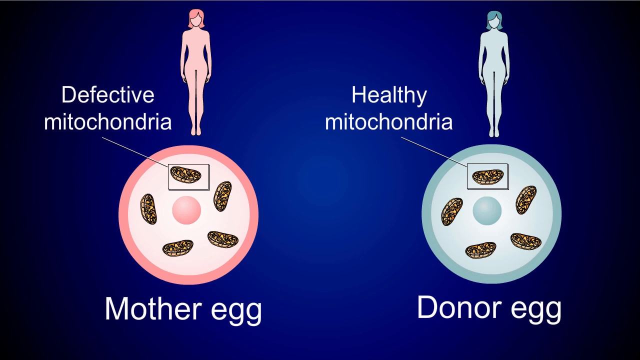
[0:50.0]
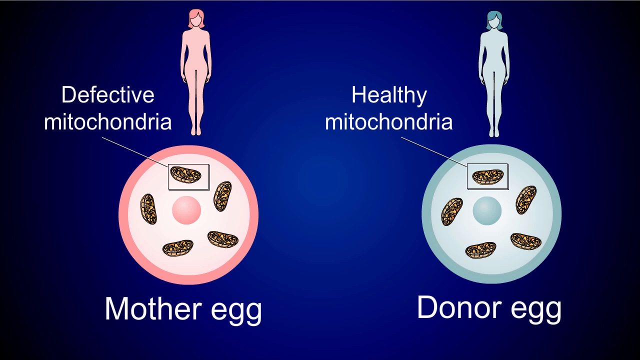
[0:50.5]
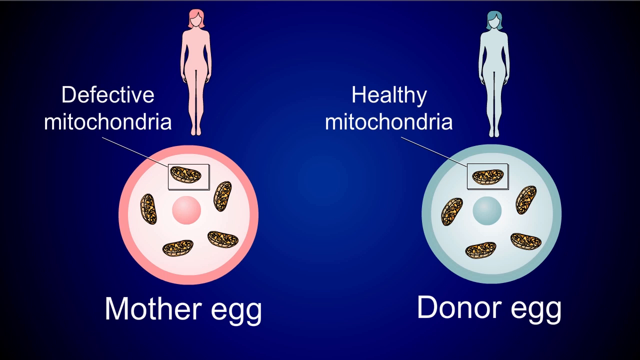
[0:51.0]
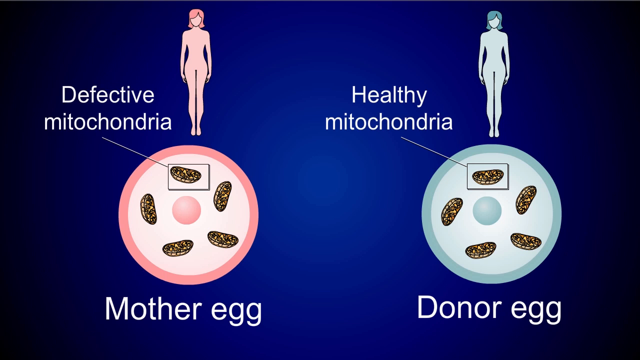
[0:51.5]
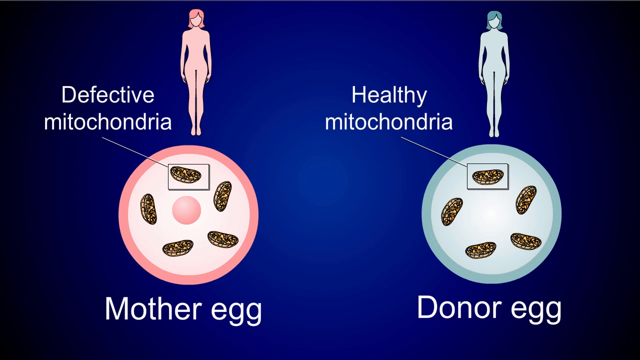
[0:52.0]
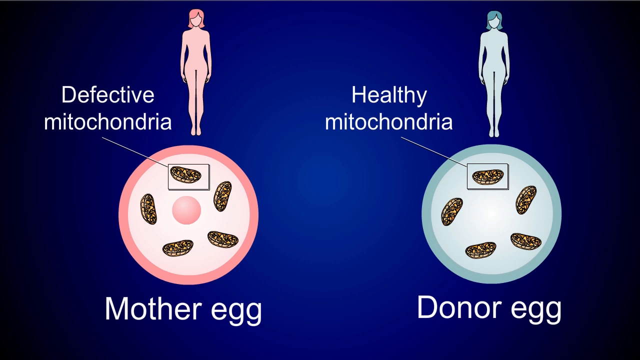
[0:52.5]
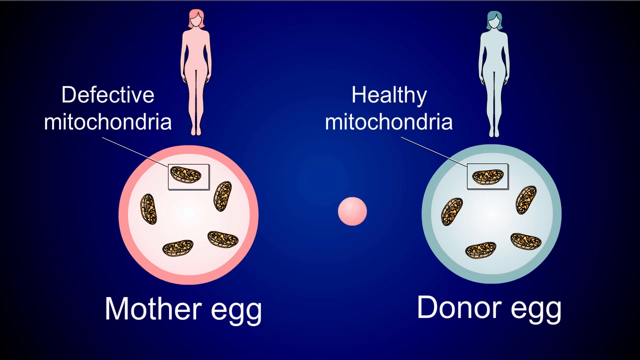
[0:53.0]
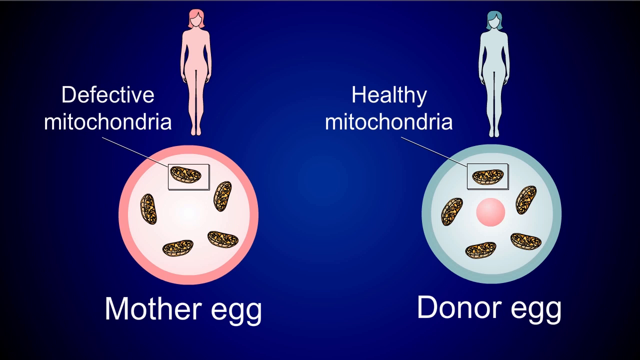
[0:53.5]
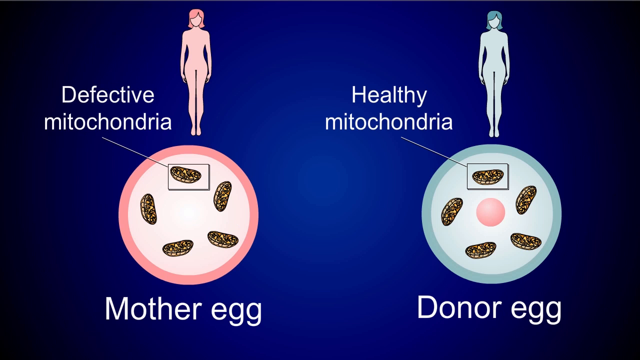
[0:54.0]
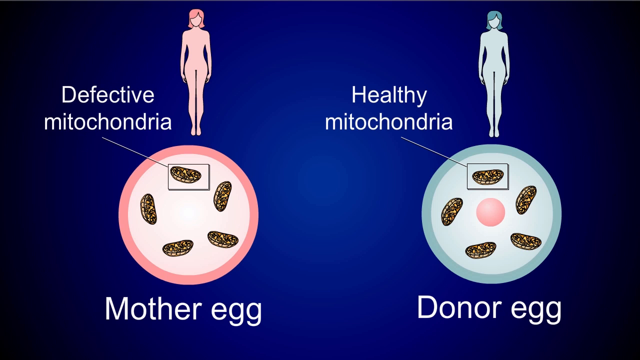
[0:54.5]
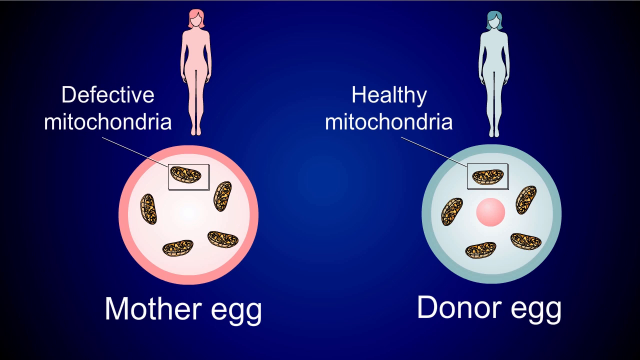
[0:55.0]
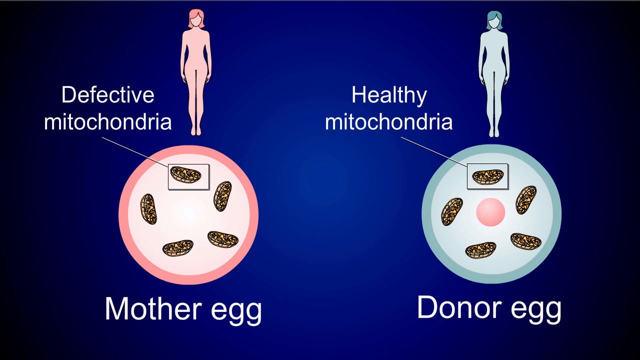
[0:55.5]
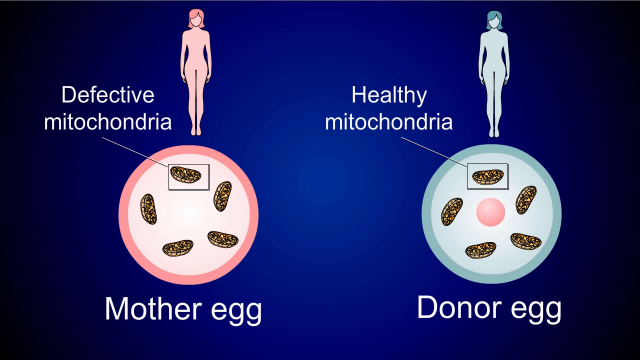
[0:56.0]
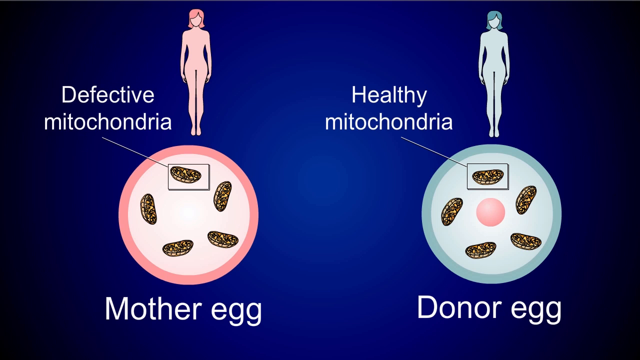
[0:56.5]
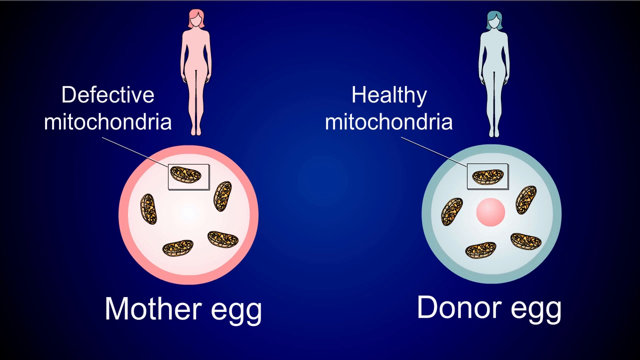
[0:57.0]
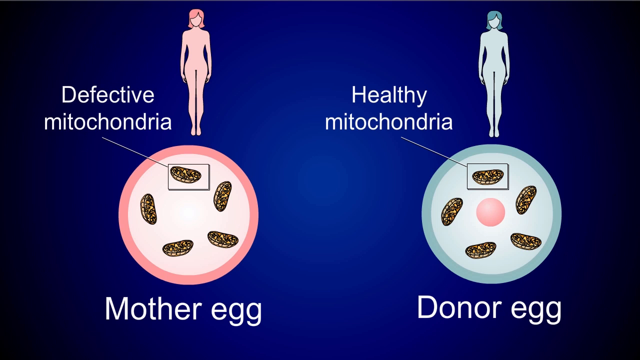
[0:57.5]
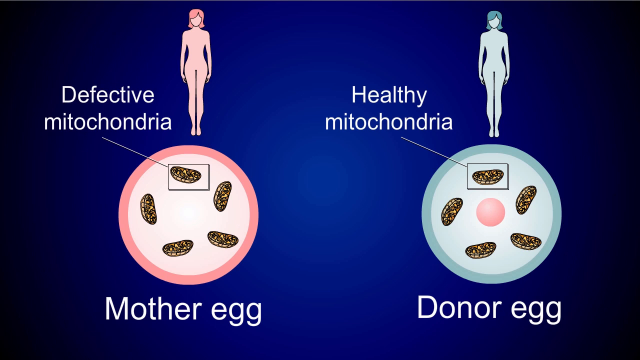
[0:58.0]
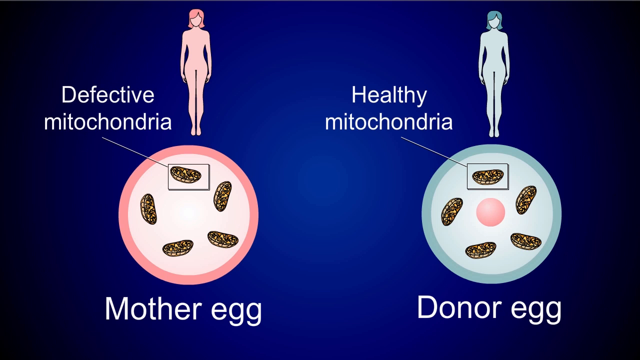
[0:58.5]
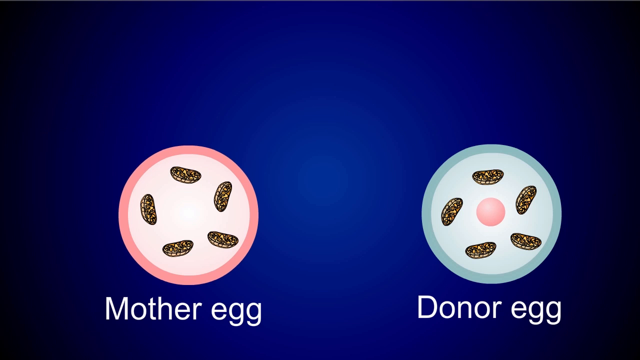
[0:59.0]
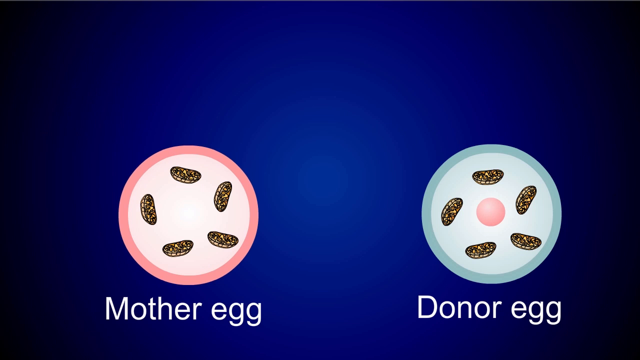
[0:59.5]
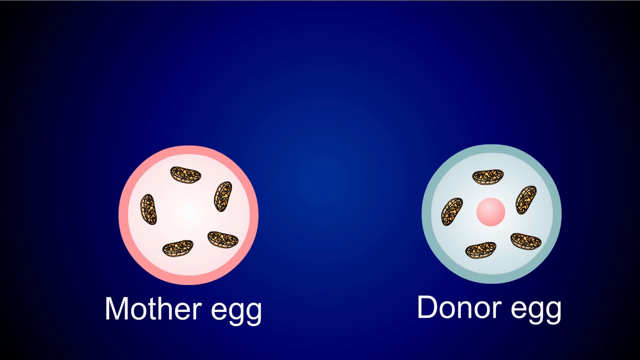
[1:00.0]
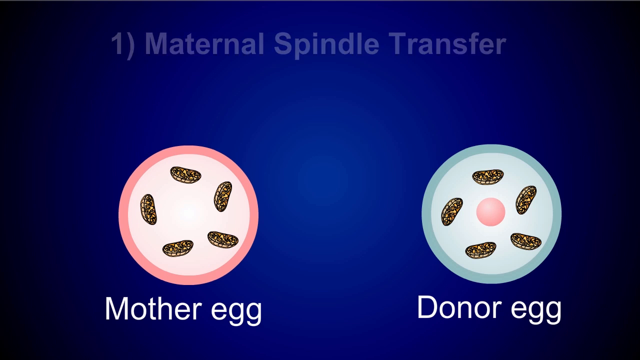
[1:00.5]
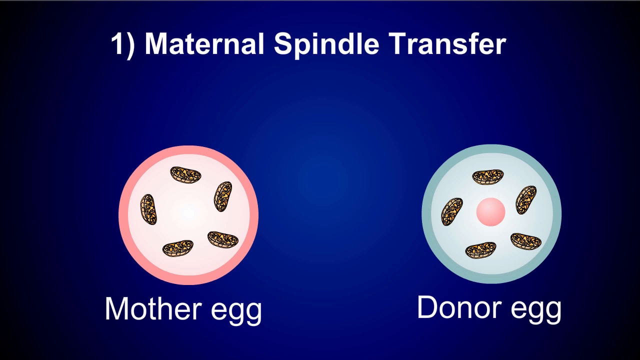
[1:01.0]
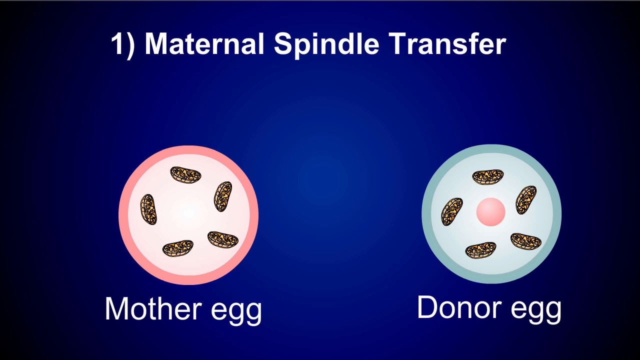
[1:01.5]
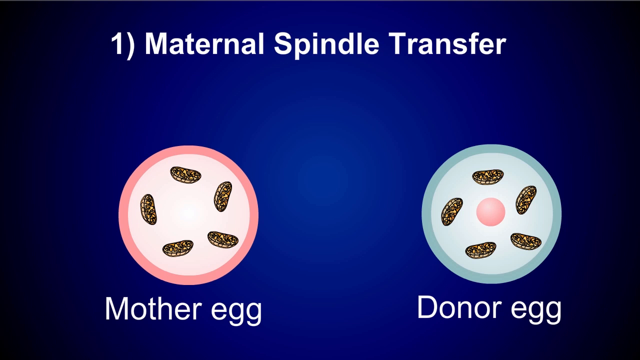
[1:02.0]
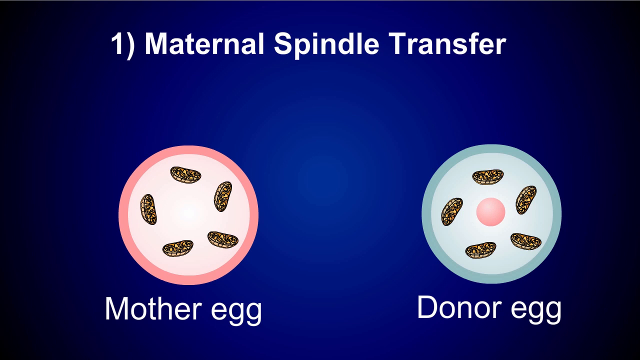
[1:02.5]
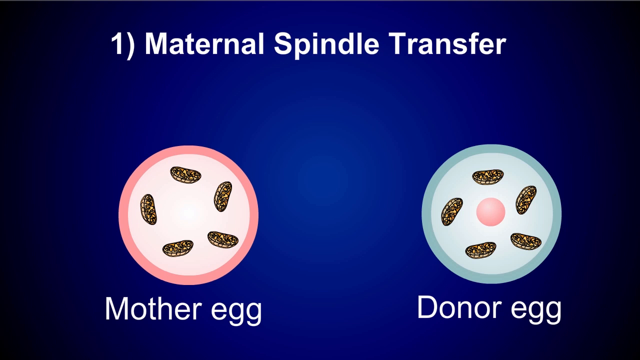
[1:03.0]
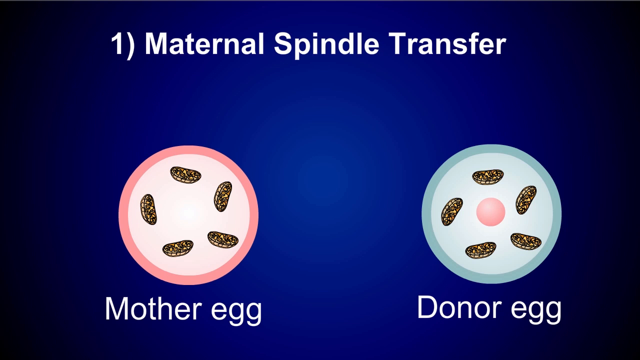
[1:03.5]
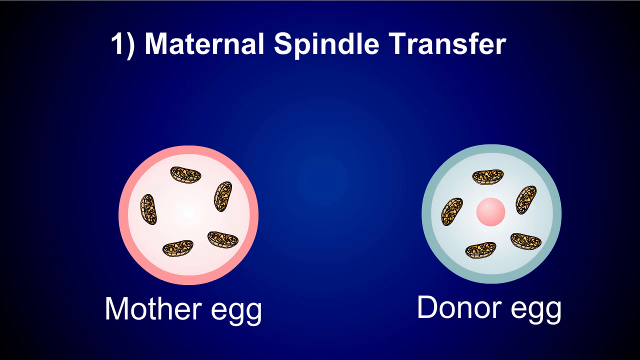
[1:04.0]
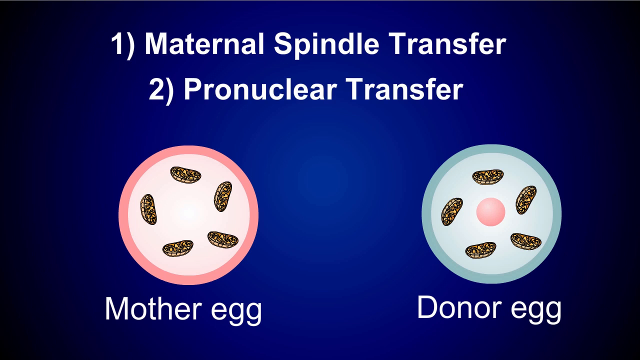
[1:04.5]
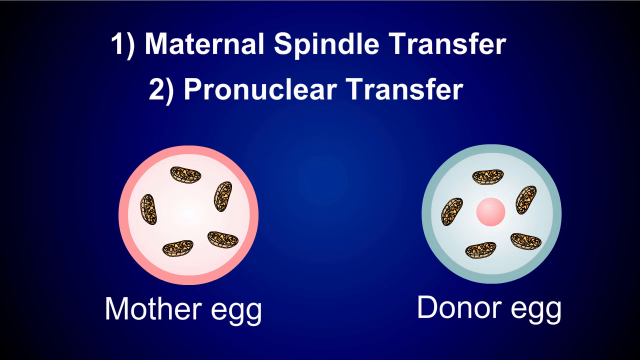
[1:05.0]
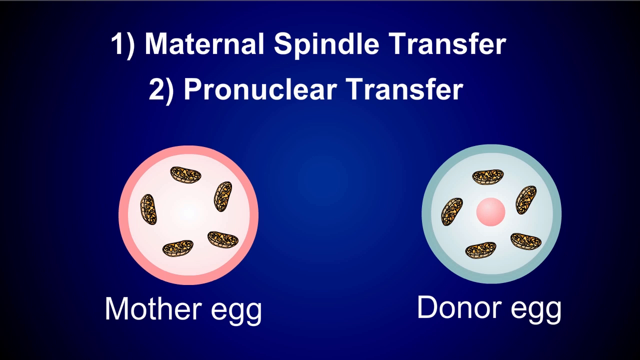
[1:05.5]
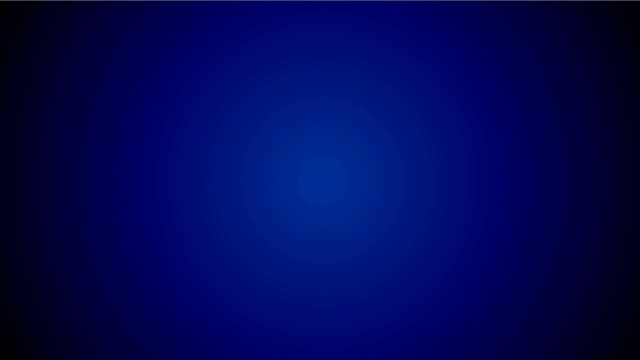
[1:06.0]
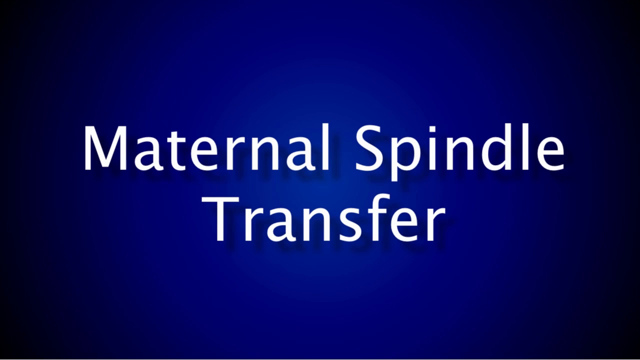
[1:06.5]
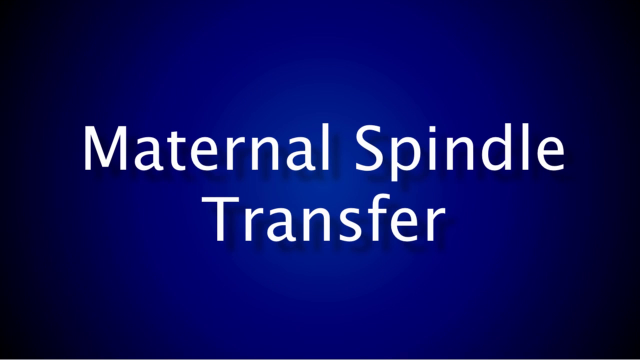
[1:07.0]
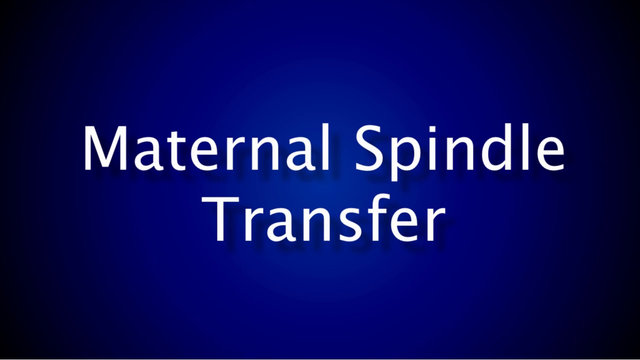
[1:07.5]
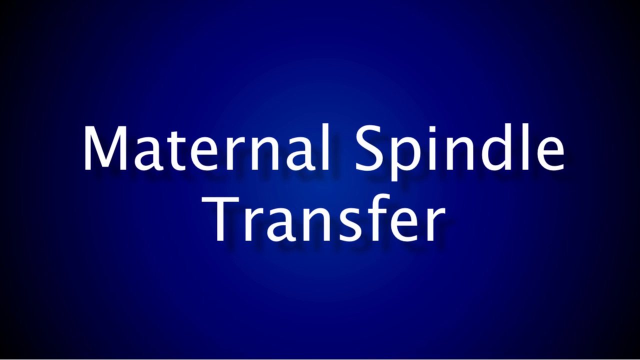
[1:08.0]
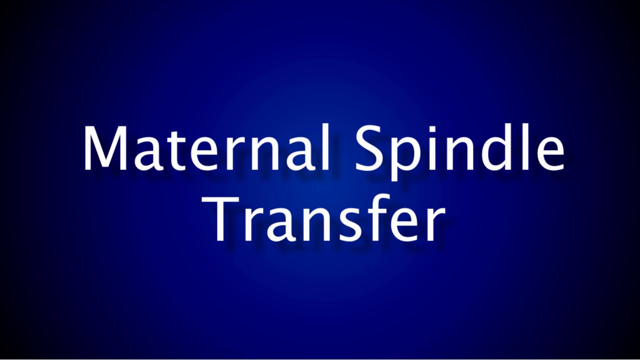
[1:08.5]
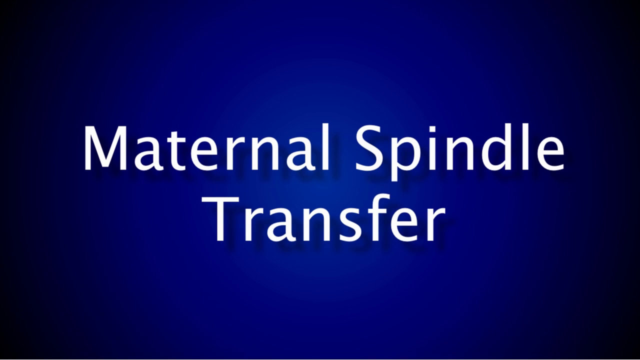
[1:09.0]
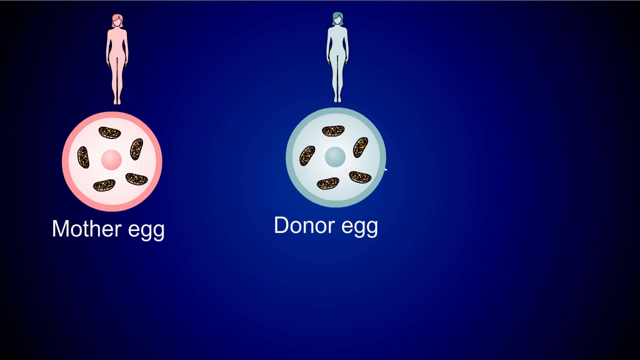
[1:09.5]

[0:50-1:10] Animated pictures appear on a navy background: a woman drawn in pink on the left and a woman drawn in blue on the right. On the left, text reads "defective mitochondria" and points to a mitochondria inside the mother egg; on the right, text reads "healthy mitochondria" beside a donor egg. The central area of the mother egg is taken out, zoomed across the screen and put into the donor egg. Text then pops up at the top reading "maternal spindle transfer", with number two reading "pronuclear transfer", and then a full screen pops up reading "maternal spindle transfer".